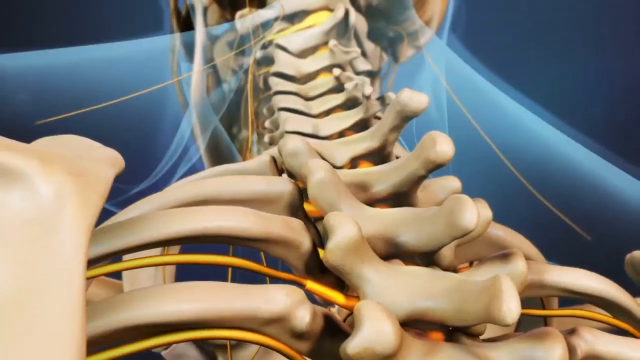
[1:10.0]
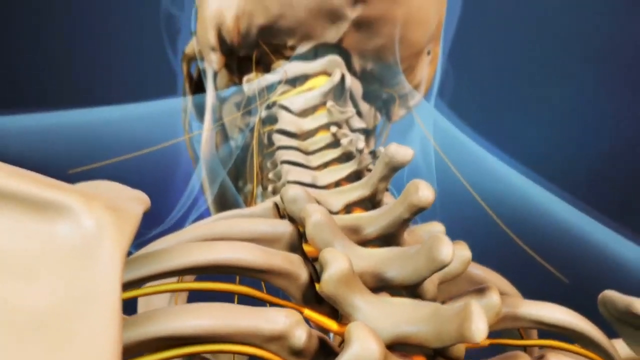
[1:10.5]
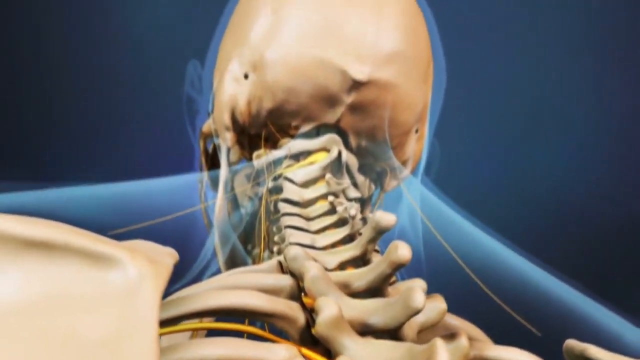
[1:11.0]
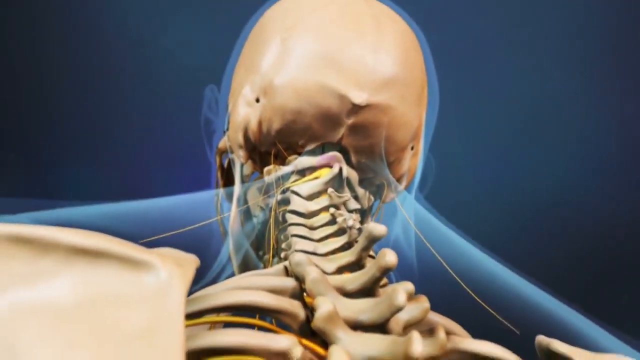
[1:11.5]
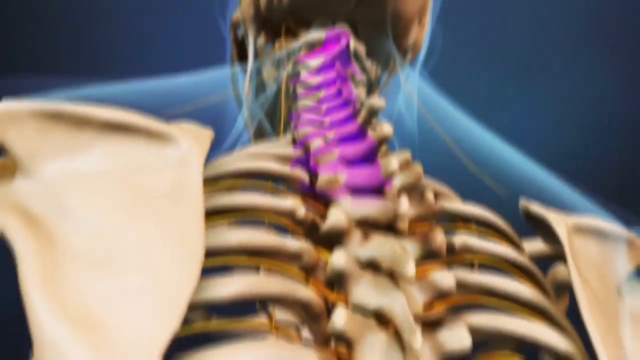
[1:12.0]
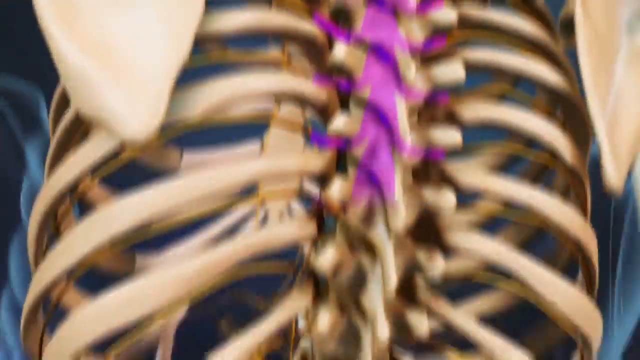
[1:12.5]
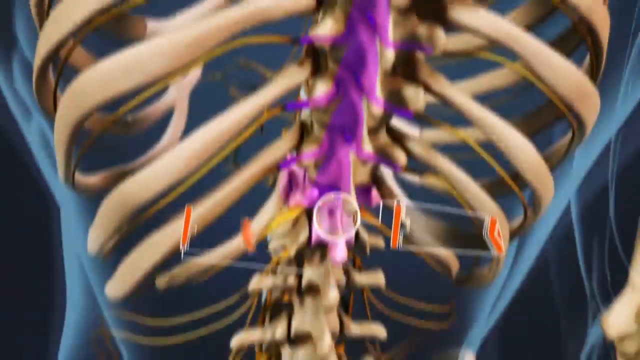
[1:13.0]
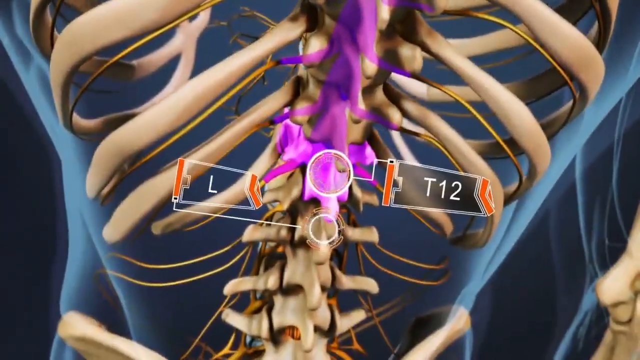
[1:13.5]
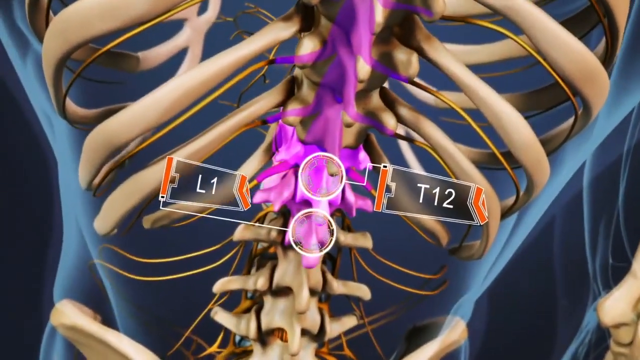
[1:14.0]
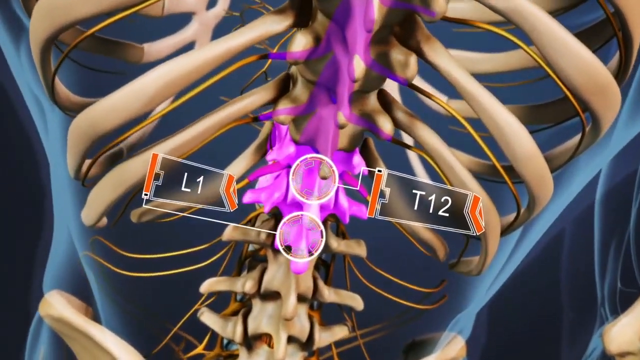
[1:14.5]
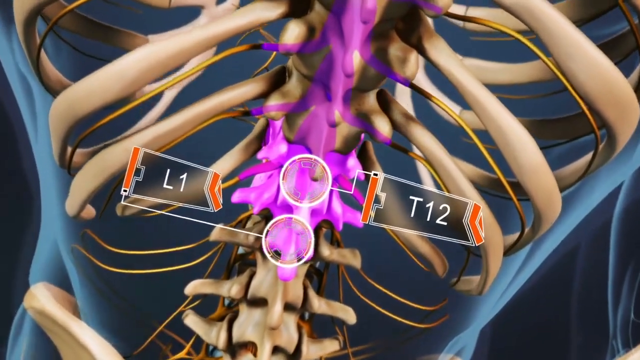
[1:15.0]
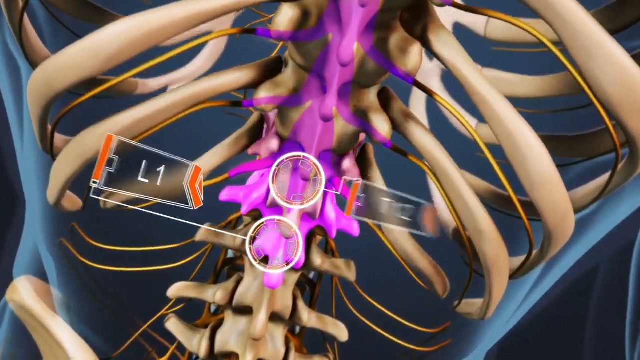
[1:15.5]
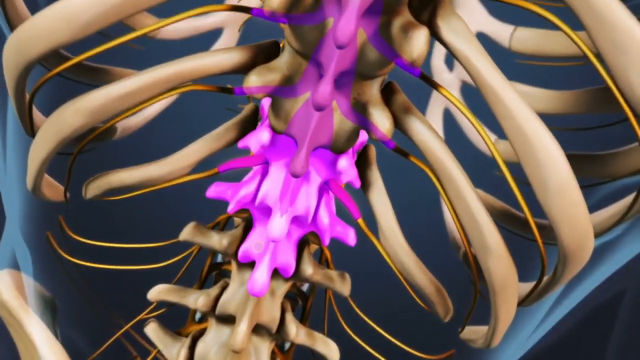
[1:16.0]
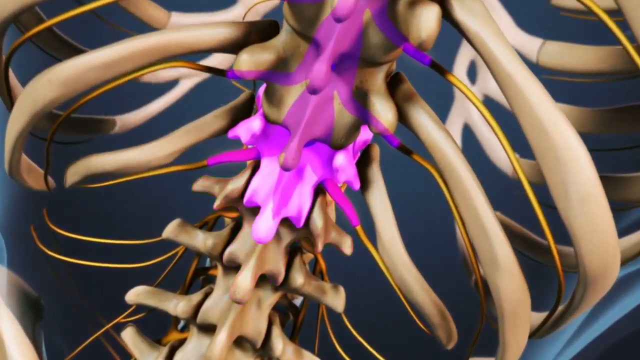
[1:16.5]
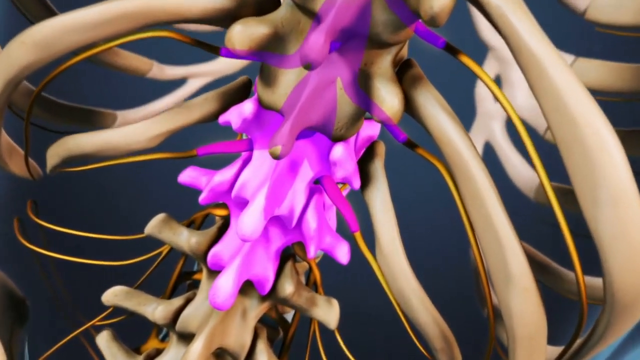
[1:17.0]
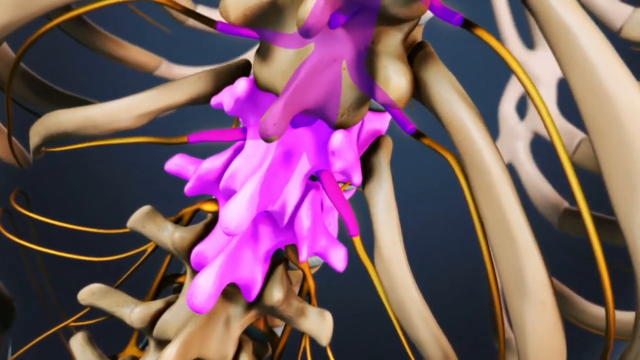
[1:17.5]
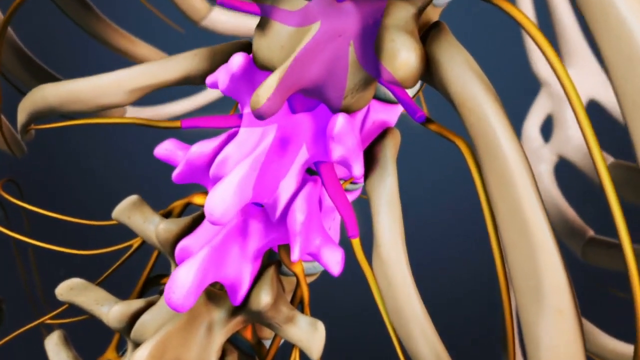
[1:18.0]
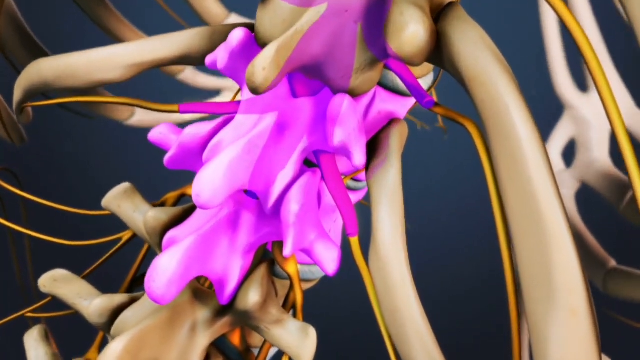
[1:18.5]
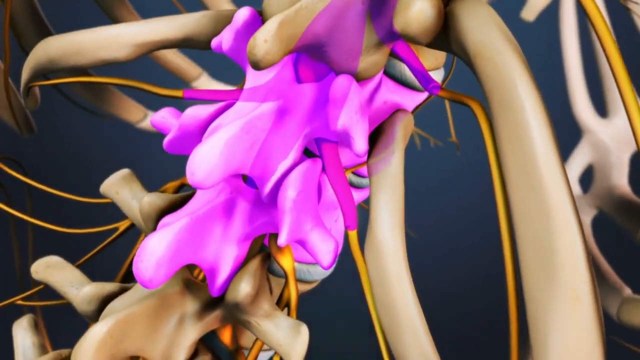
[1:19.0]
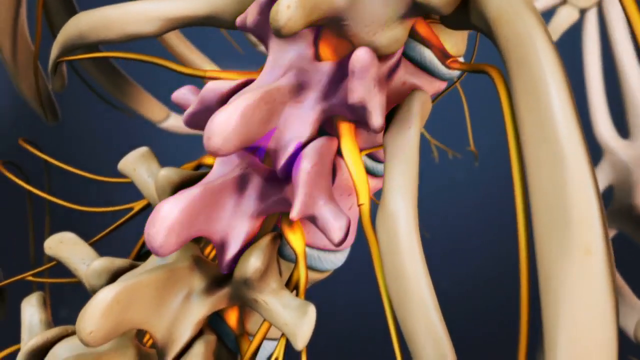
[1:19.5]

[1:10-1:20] Starting at the base of the skull, the view moves down the back of the skull line as it is highlighted in purple. Moving down to below the rib cage, labels appear for the T12 and L1 vertebrae. The view slowly zooms in as the area throbs in a pink glow, and then the ligaments from there are shown moving down the body of the spine.